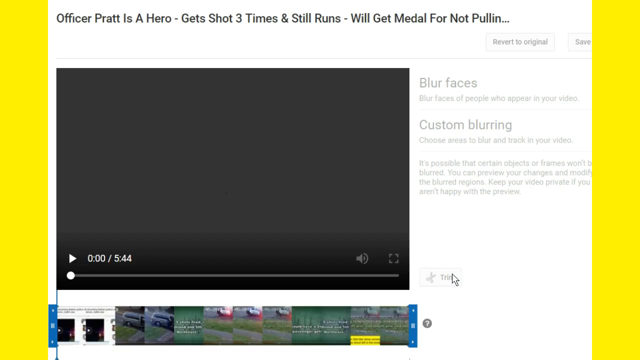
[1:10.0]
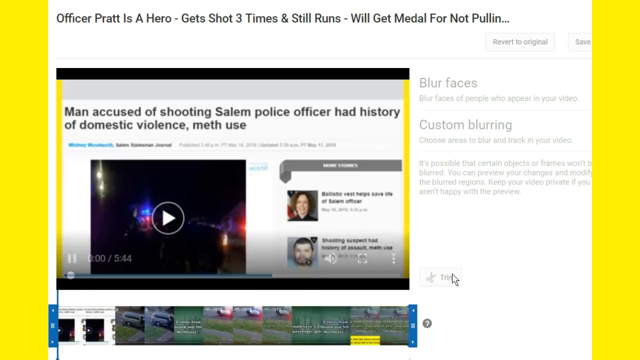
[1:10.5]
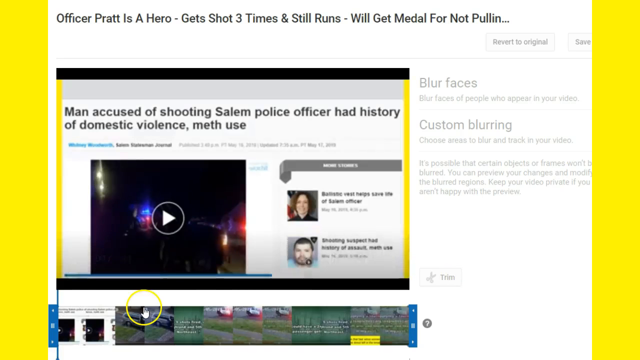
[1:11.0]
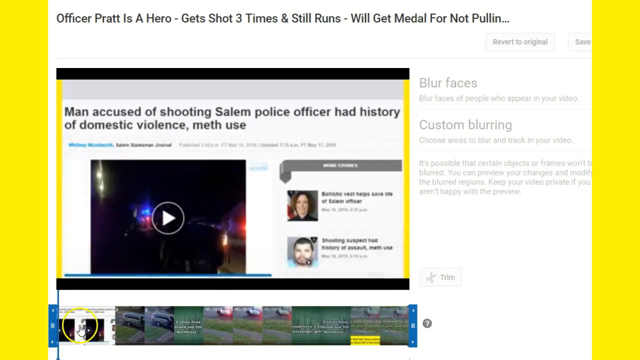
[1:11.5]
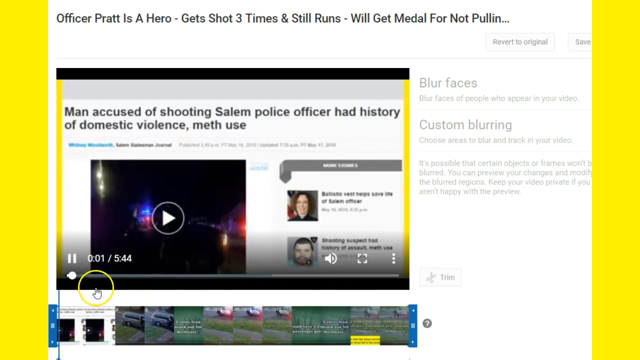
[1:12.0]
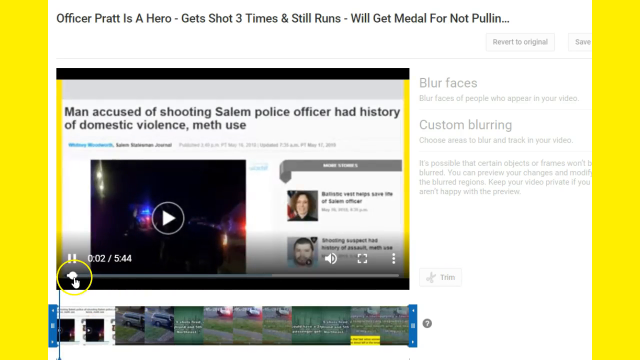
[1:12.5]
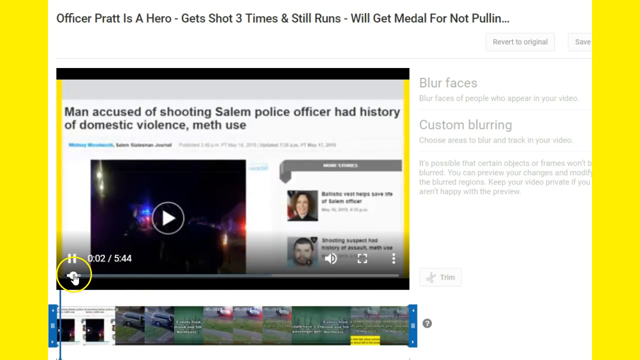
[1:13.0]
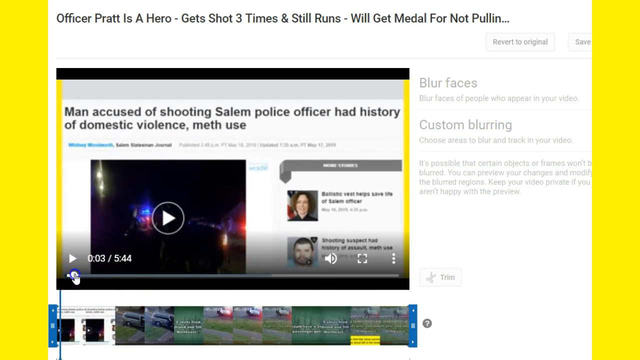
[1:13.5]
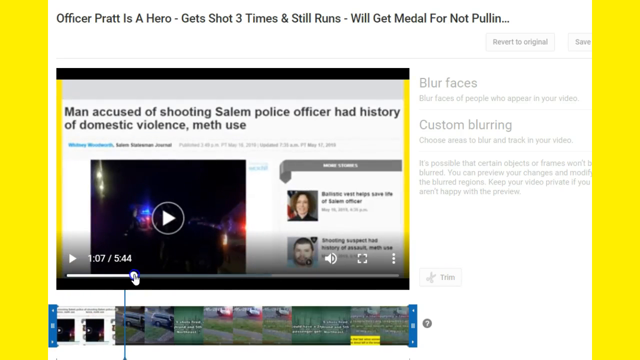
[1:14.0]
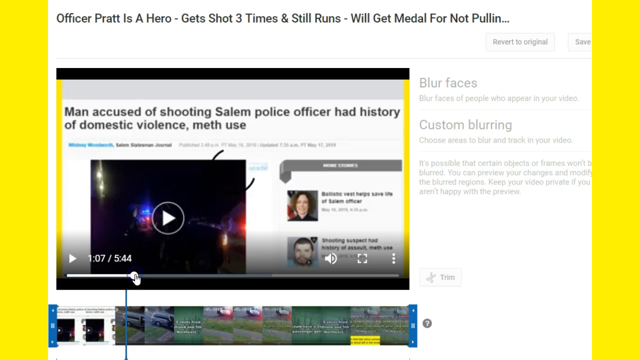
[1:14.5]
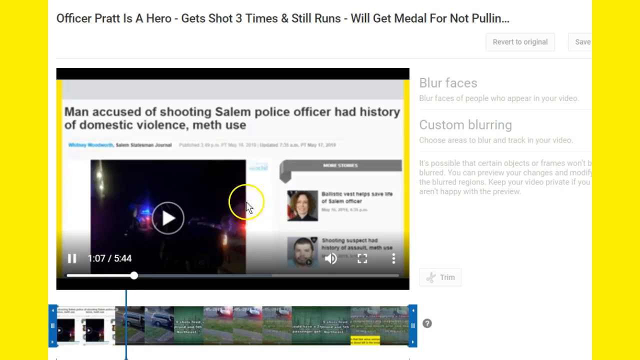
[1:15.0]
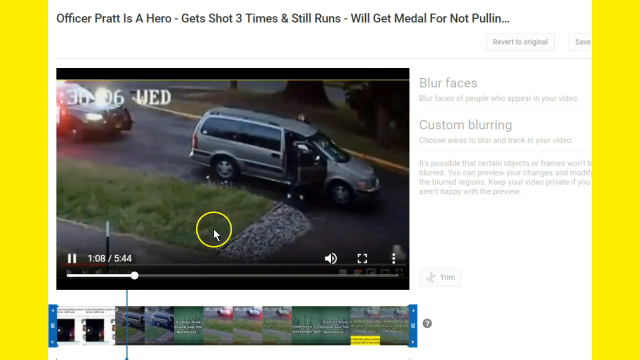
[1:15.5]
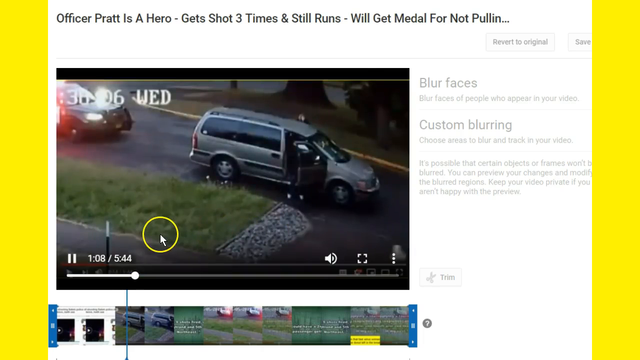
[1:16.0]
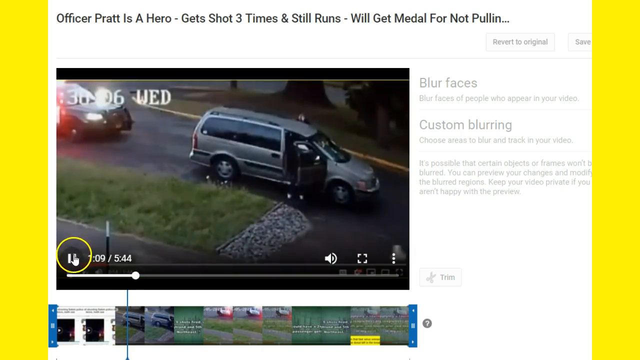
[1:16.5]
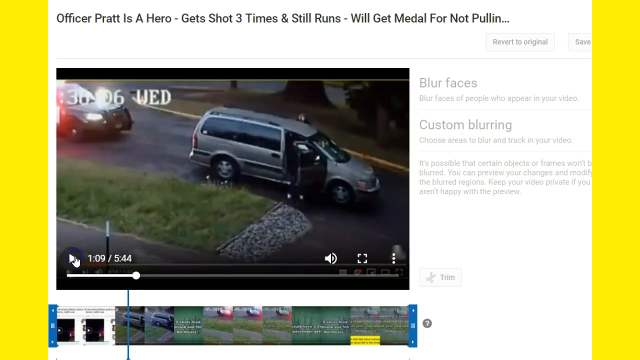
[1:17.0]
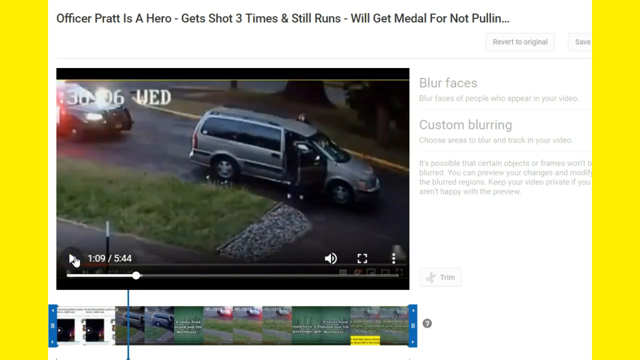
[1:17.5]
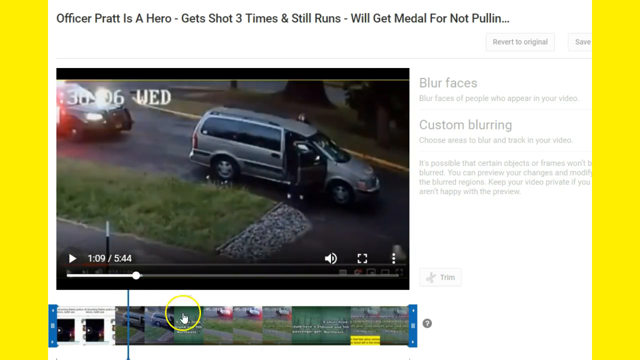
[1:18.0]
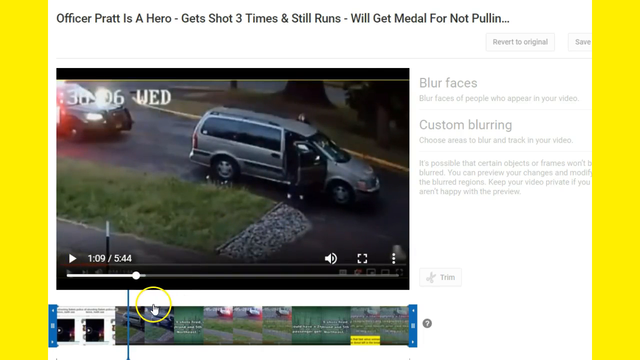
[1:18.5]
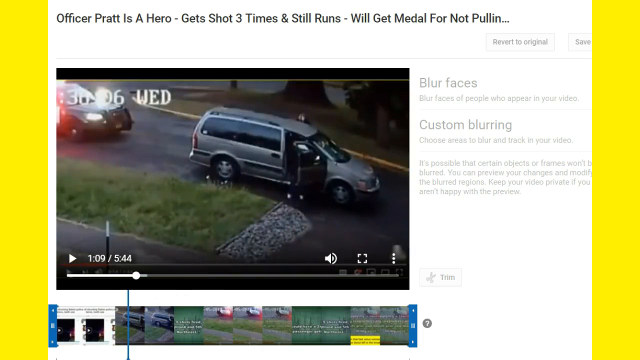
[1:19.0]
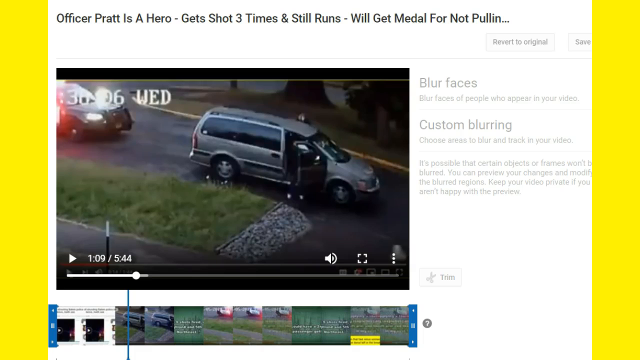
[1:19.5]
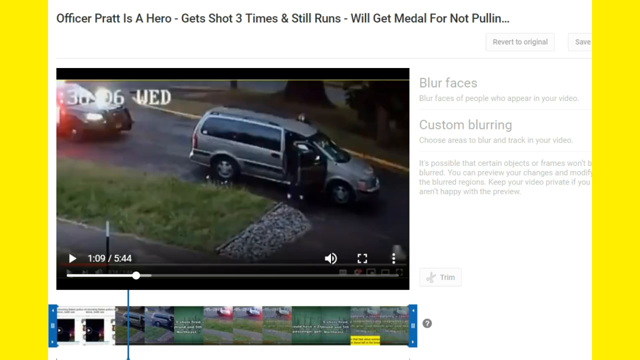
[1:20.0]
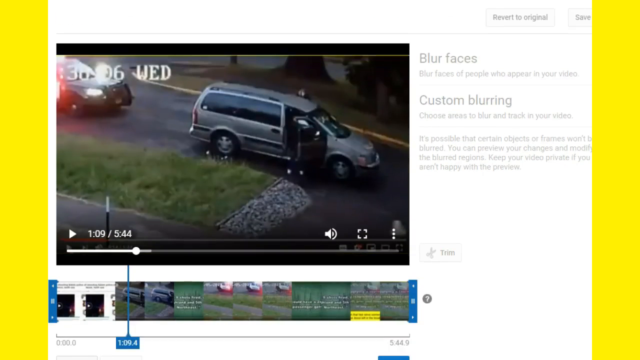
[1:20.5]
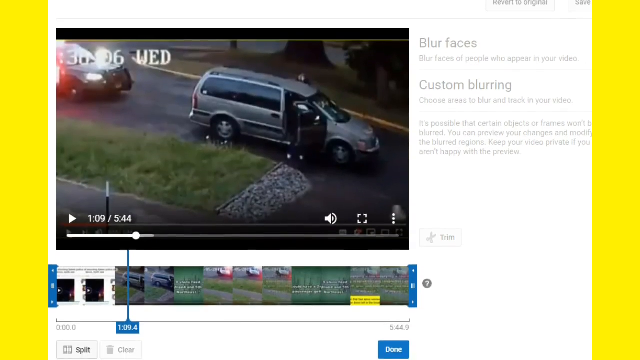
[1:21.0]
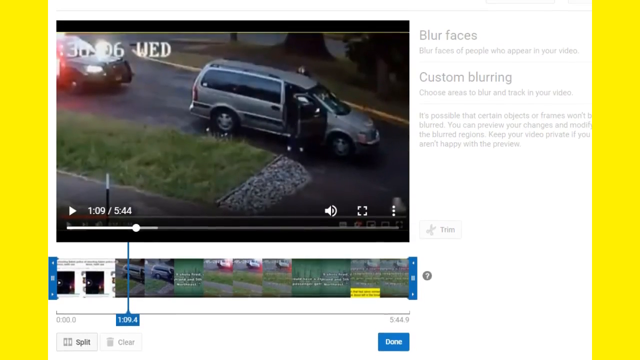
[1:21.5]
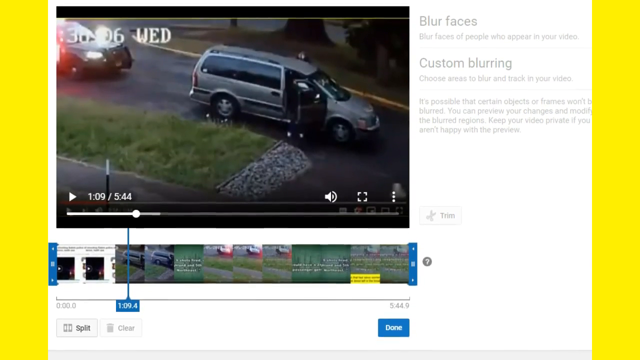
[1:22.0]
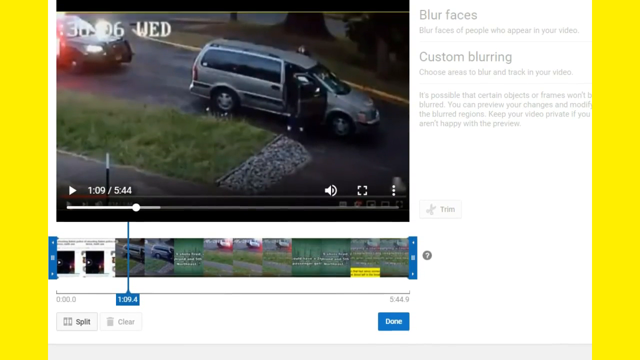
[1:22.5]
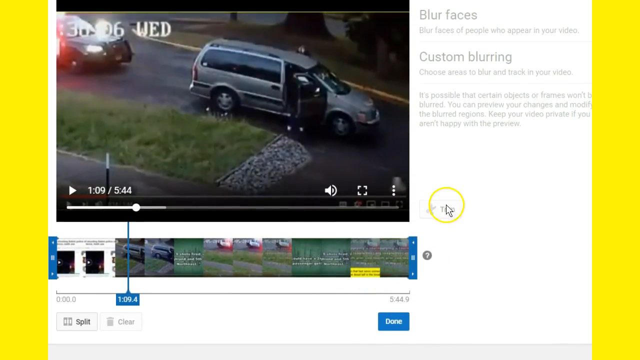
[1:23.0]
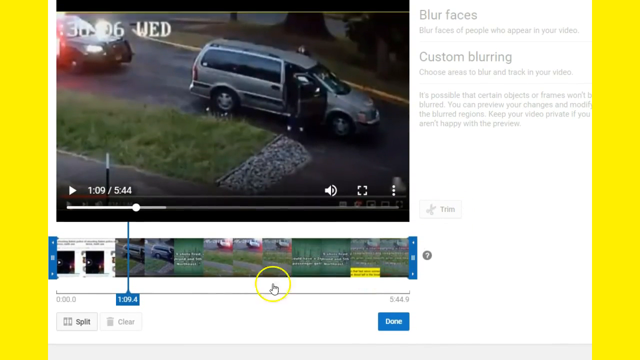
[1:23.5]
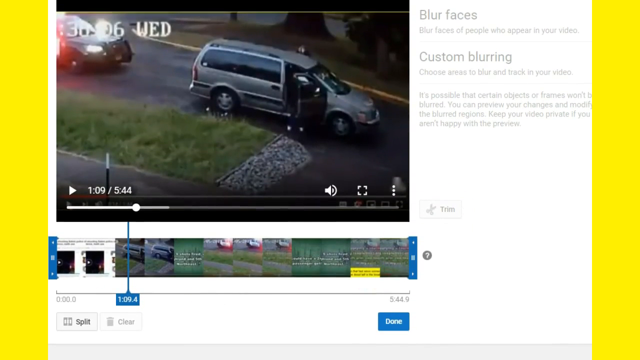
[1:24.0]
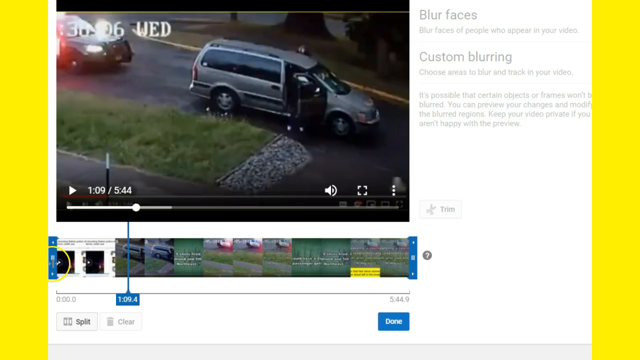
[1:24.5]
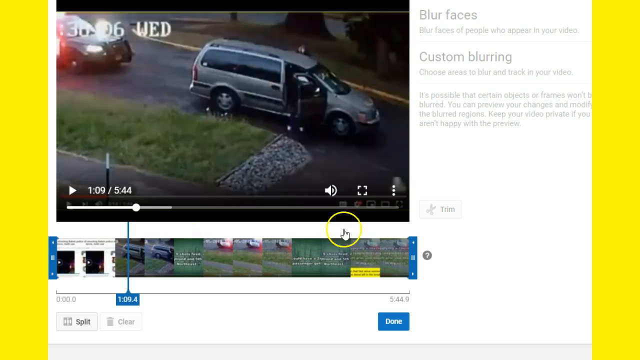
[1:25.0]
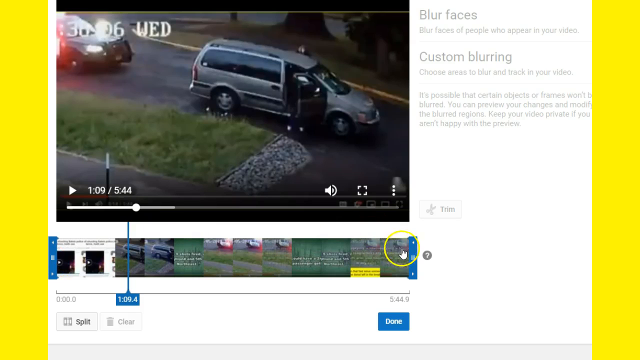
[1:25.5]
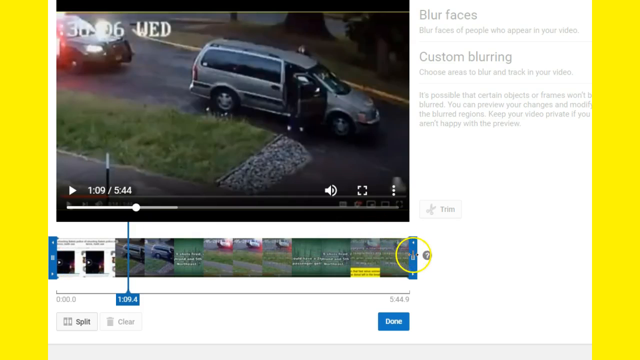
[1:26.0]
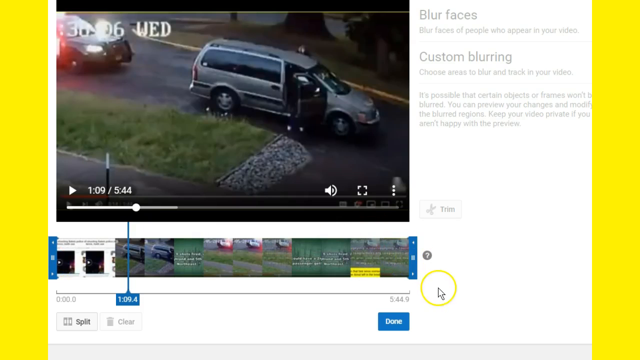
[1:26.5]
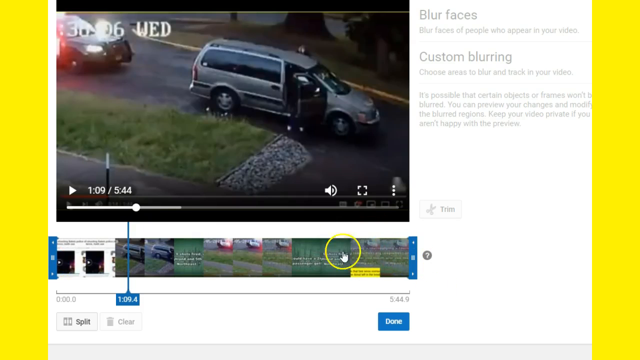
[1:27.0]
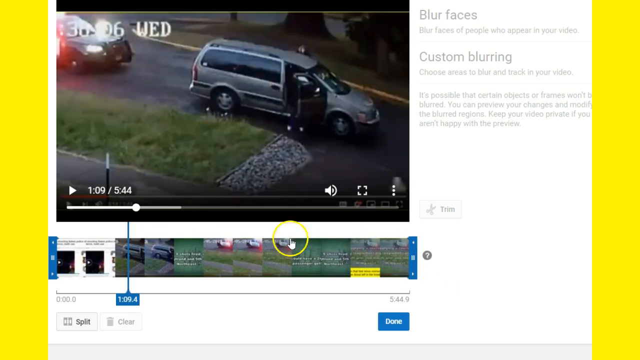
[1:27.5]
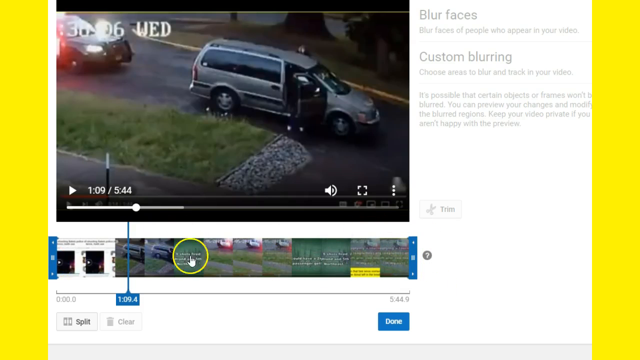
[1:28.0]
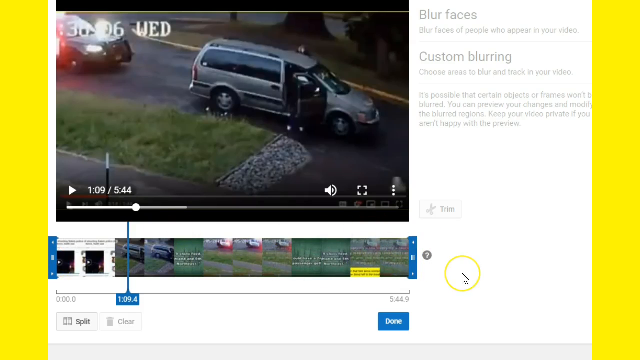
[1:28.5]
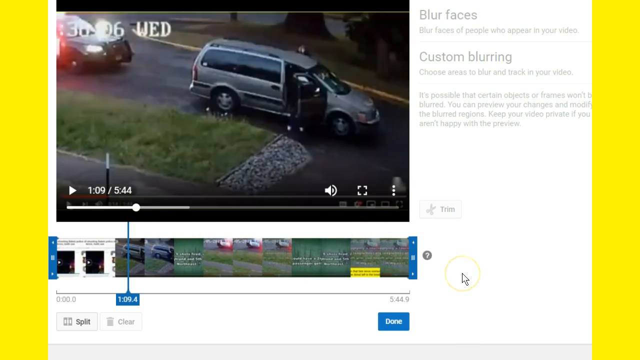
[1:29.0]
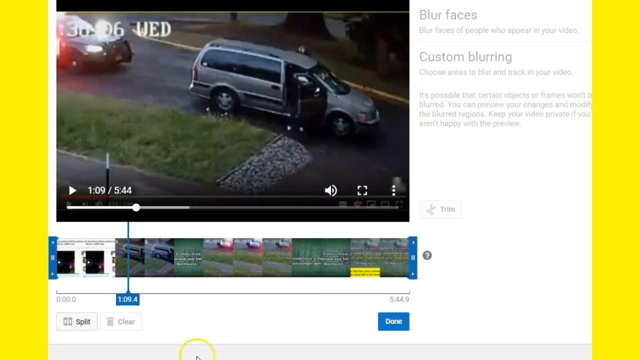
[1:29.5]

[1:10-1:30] The video seems to finally open. It shows a silver car parked with its doors open, and another car behind it with its lights on. A camera is recording. The mouse moves around, apparently trying to fast forward the video, which shows 5 minutes 44 seconds remaining. The video does not really play and seems to be paused. No one appears to be around the cars, and it seems as if it is about to get dark.